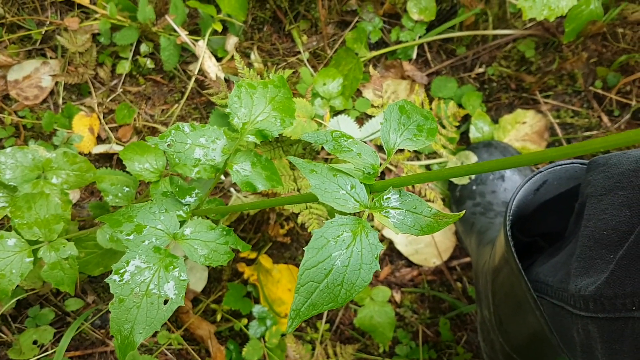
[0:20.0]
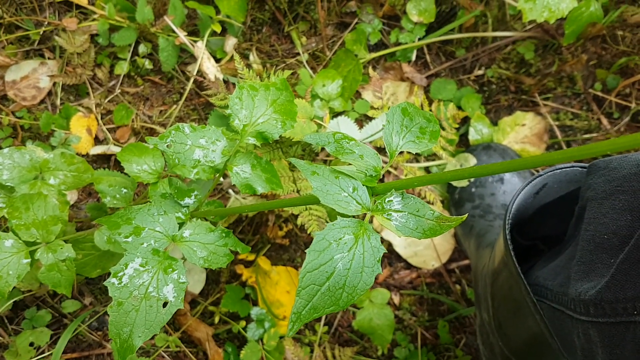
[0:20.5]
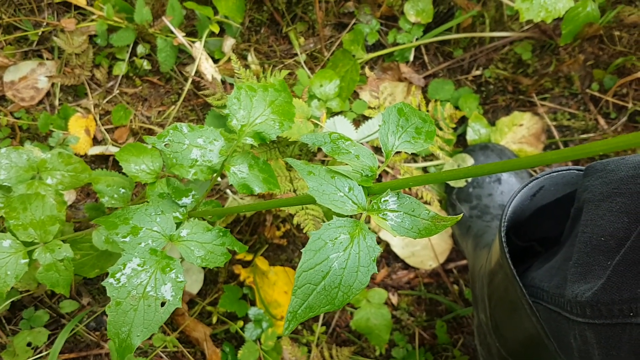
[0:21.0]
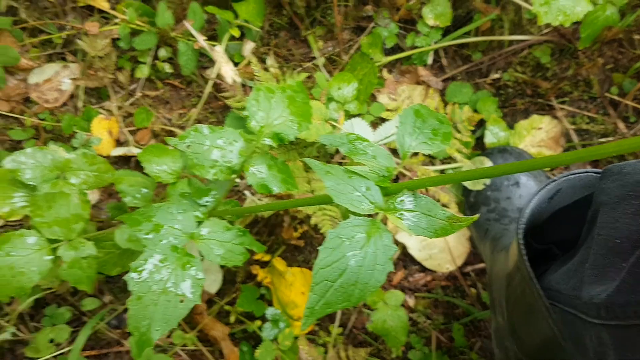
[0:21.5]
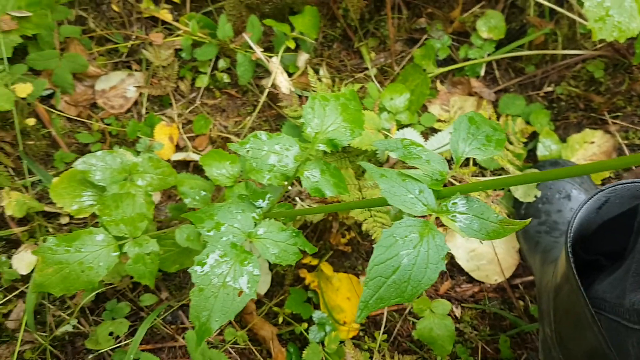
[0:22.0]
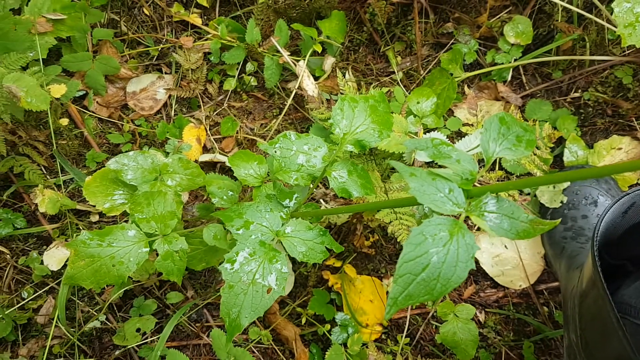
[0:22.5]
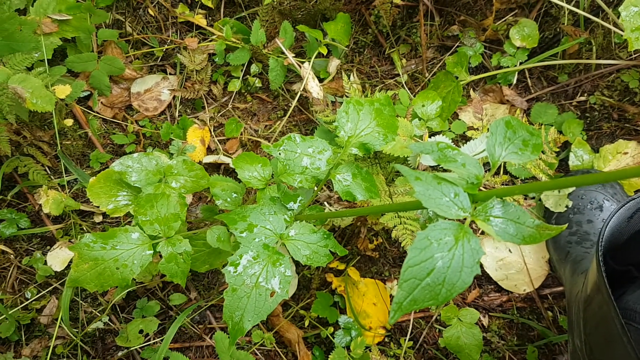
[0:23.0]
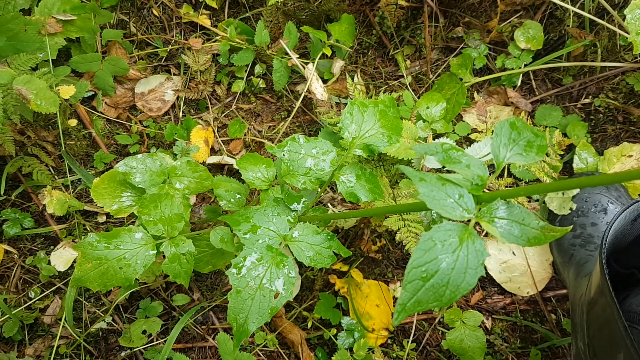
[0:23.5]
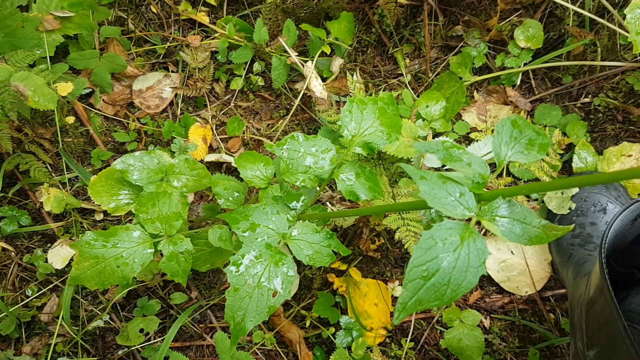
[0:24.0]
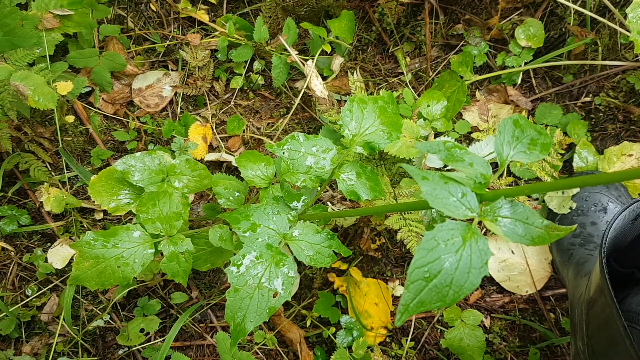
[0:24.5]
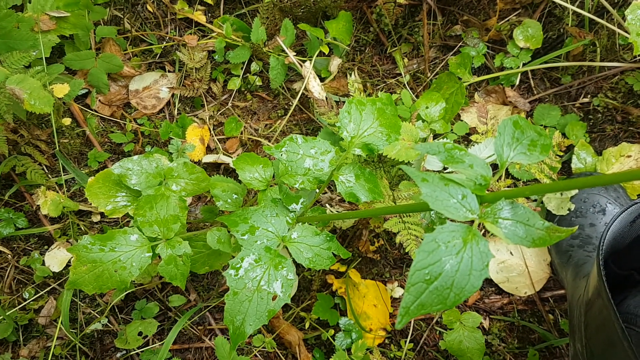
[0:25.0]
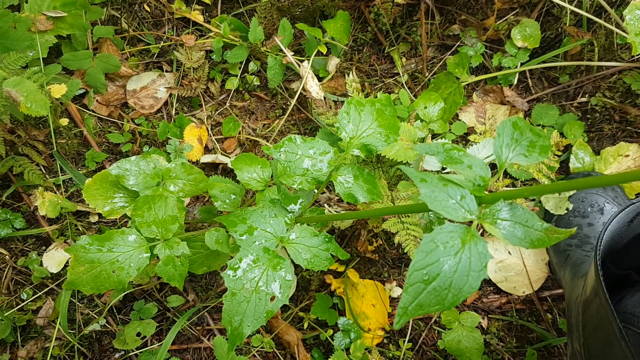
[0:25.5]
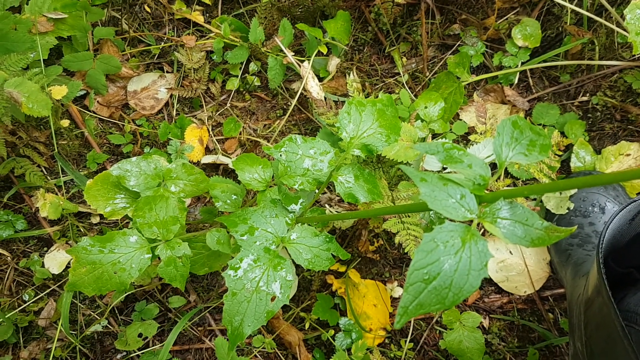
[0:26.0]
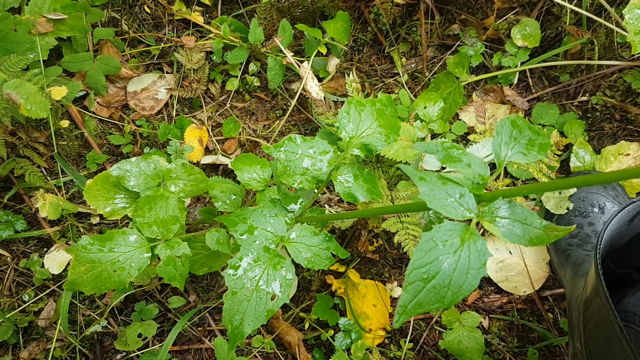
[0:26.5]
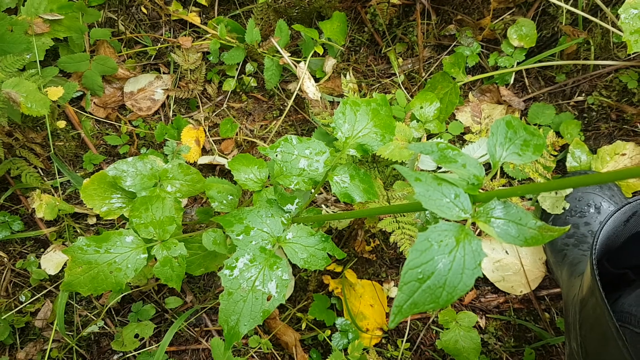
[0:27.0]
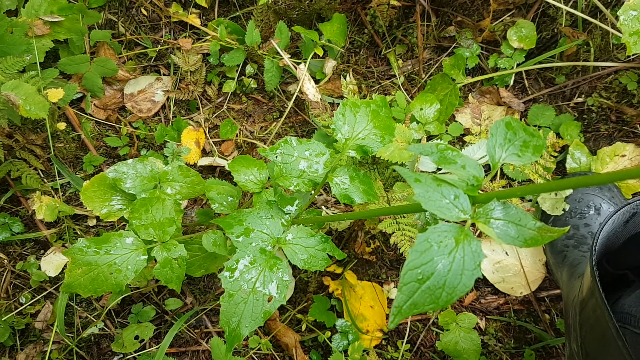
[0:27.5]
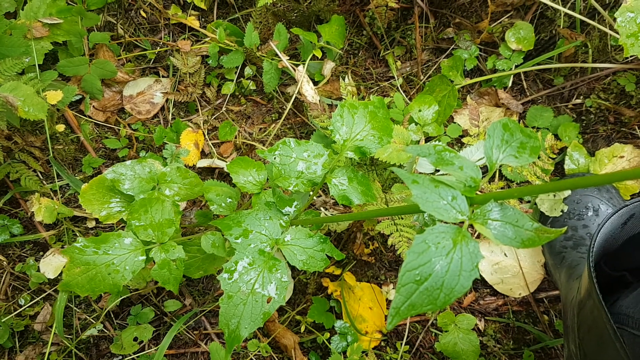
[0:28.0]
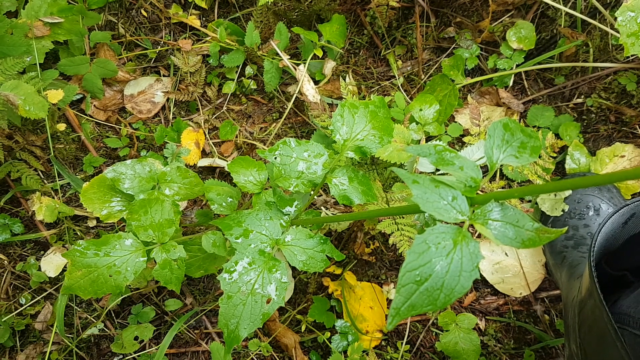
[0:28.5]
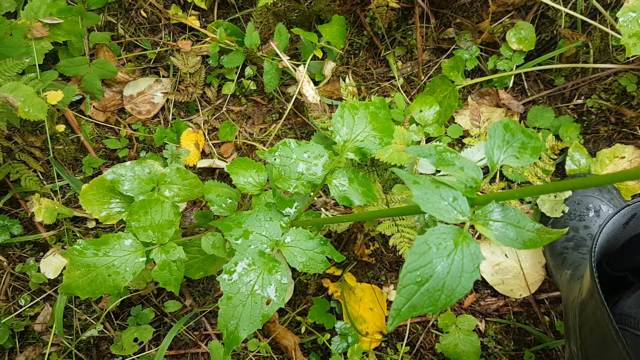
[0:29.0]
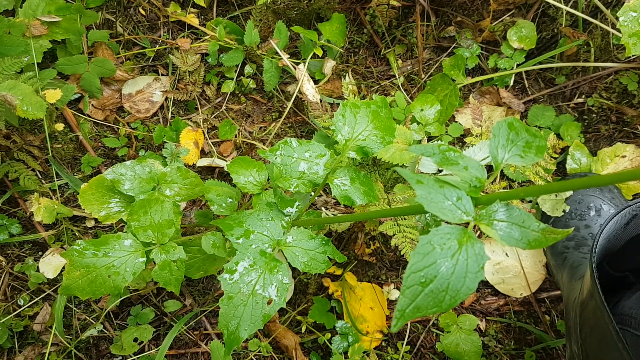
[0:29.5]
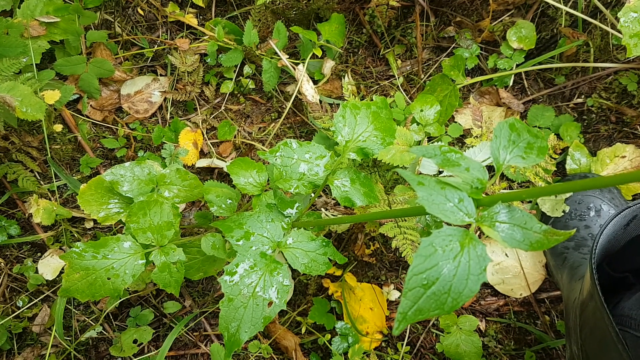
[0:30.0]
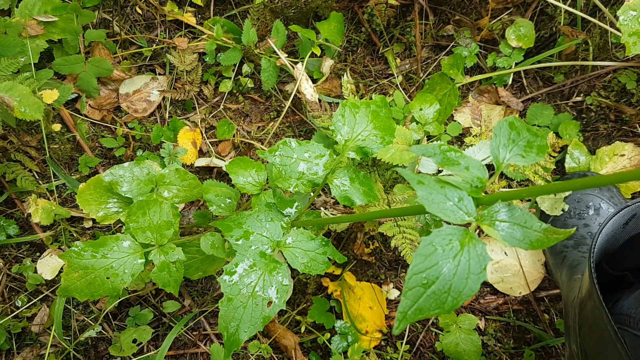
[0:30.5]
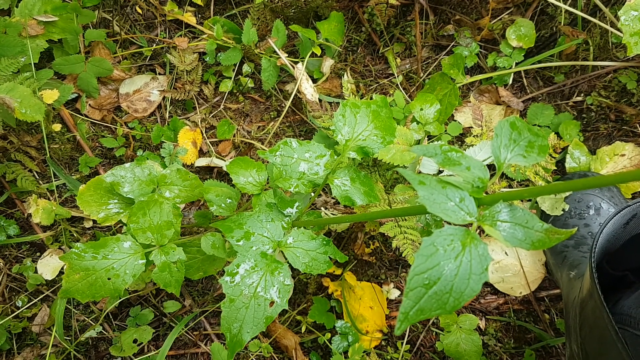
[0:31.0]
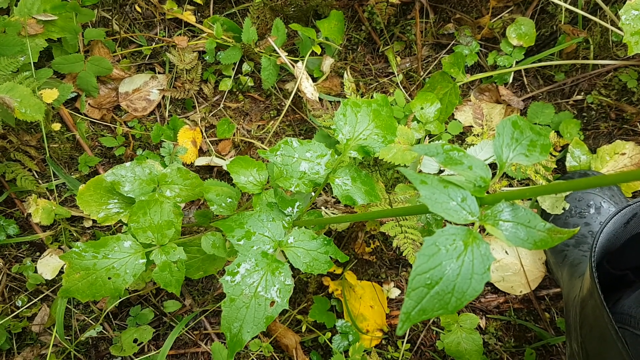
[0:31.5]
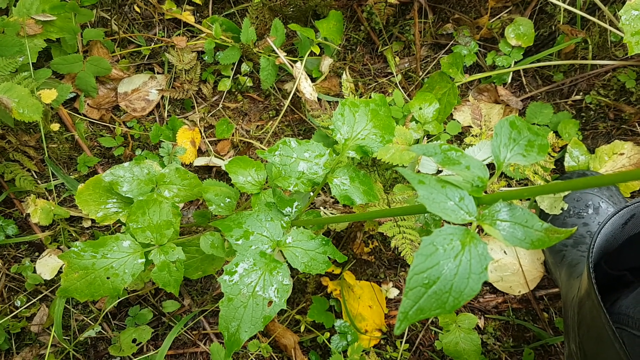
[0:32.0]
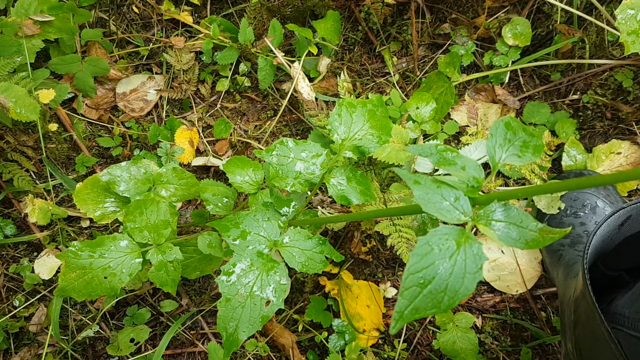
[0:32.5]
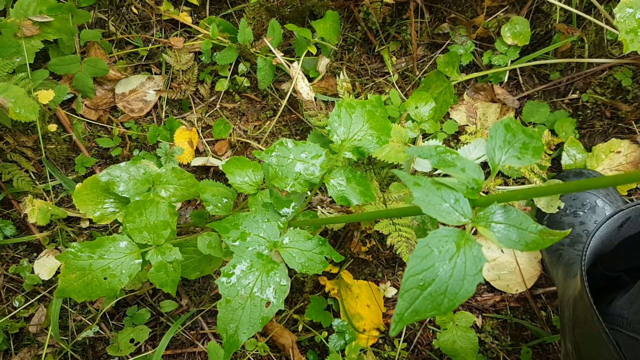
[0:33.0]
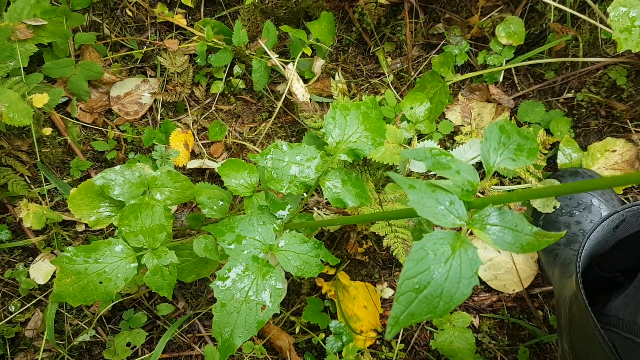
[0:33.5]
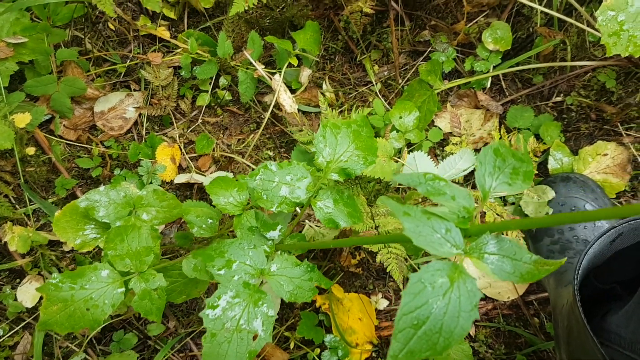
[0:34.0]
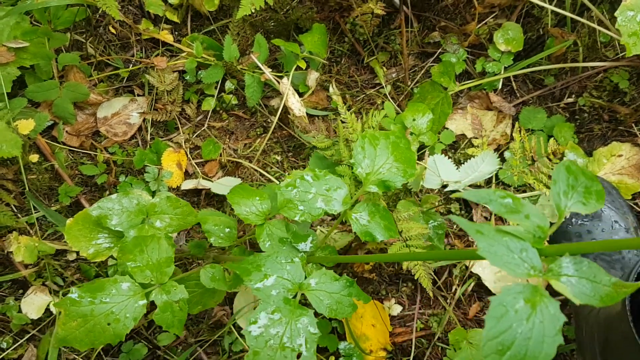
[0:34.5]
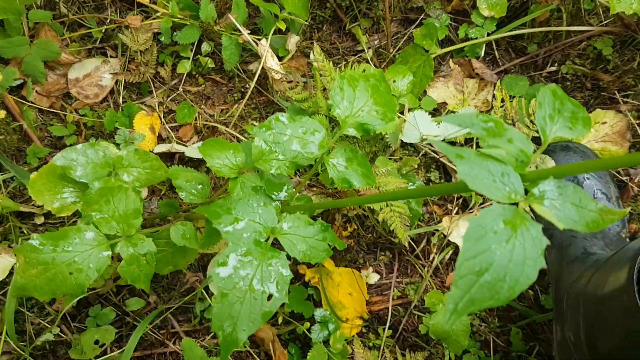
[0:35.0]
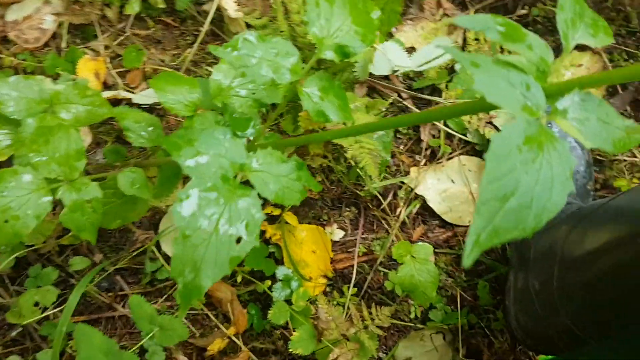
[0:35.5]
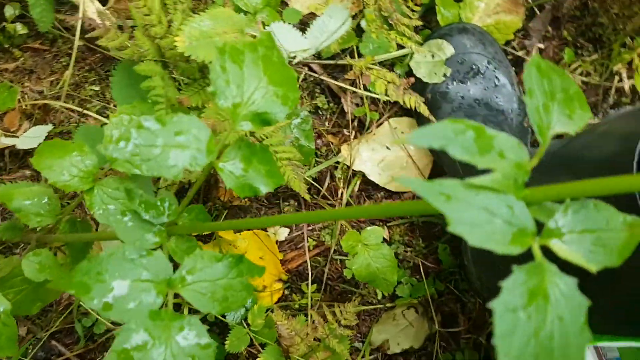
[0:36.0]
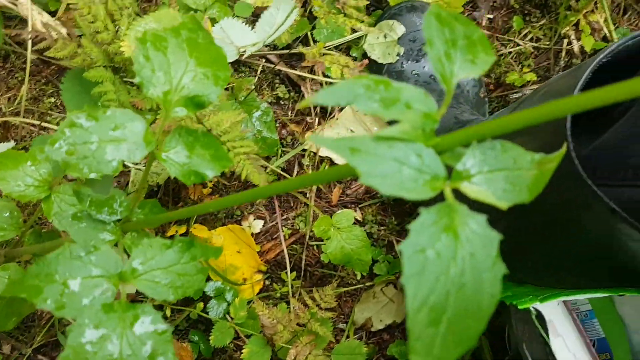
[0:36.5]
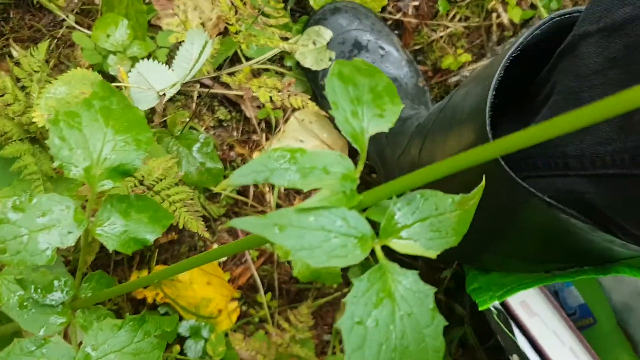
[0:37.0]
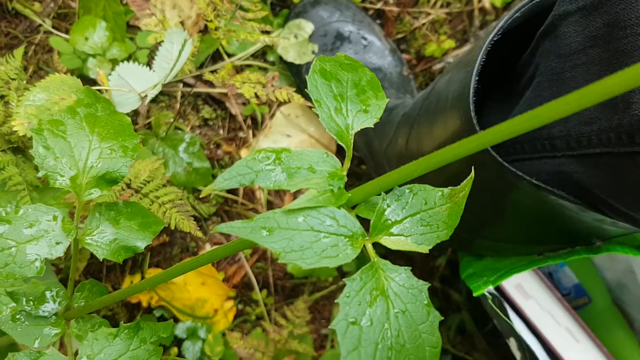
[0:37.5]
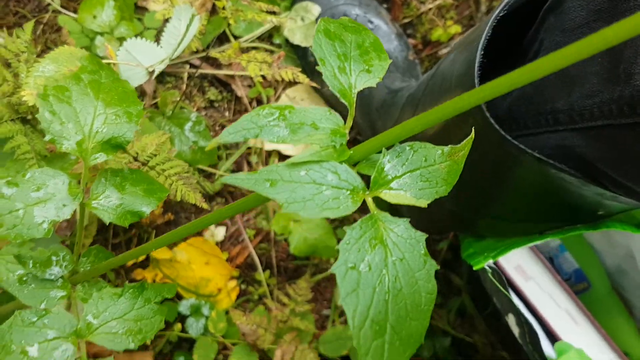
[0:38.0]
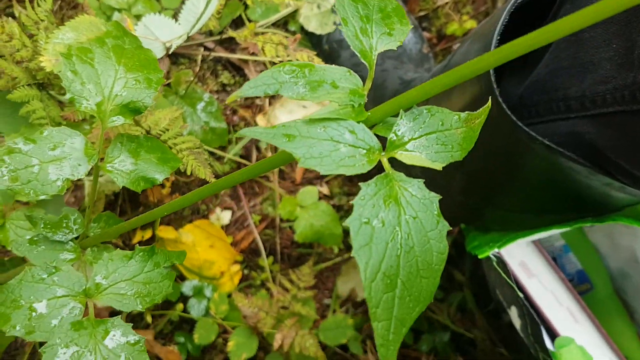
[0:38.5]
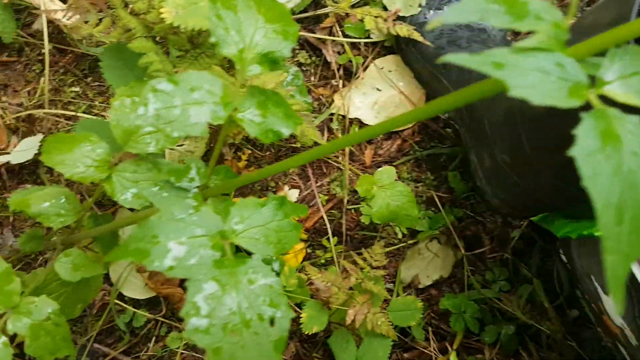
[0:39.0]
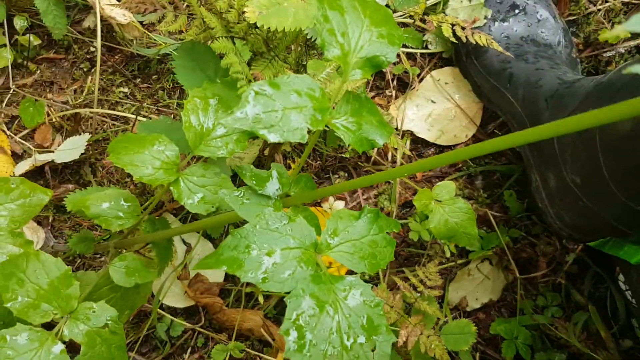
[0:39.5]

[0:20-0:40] The view stays zoomed in at the base of the plant, on its green leaves; the plant seems to be on some sort of forest ground. Underneath is brown soil with dead leaves, a few dead bits of grass and some live vegetation, and there seem to be some ferns or maybe moss around. The person's shoe, which looks leathery, is on the right side of the screen. The view holds on the pointy leaves while a small fly flutters around the bottom right corner. The angle changes a bit to focus on the leaves from a different angle, now showing the person's boot. The leaves on the plant flutter a little, and another plant in the background is also fluttering, so it seems to be slightly windy.